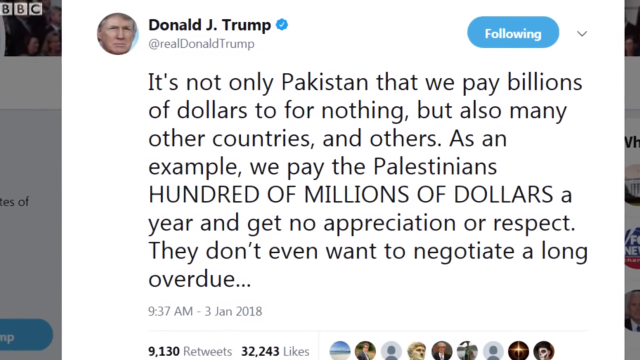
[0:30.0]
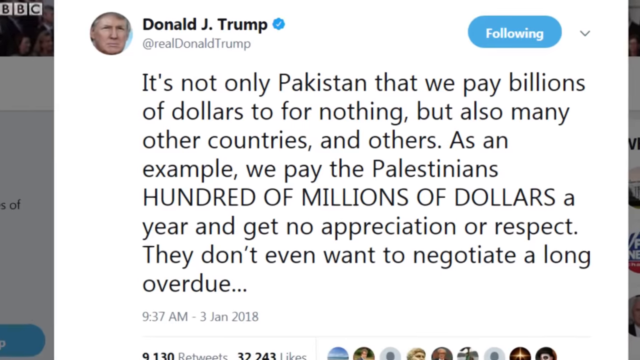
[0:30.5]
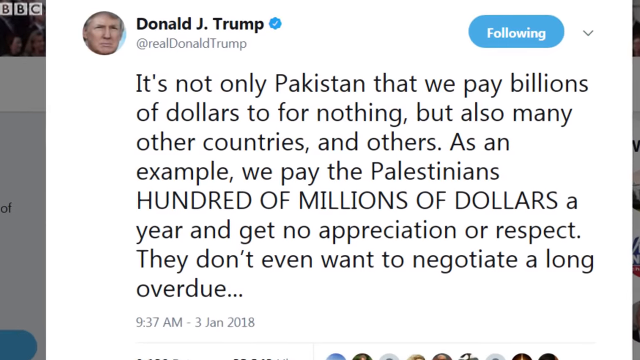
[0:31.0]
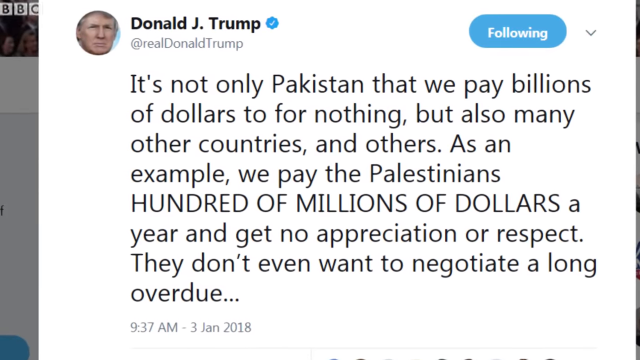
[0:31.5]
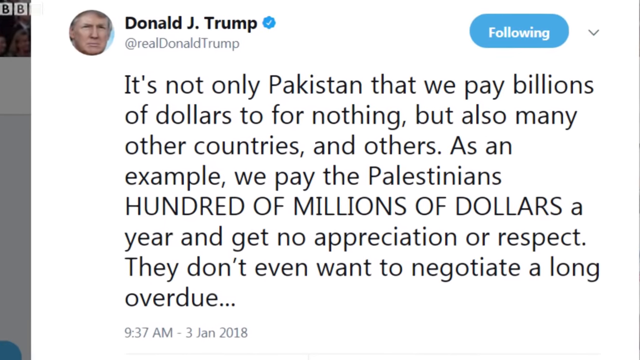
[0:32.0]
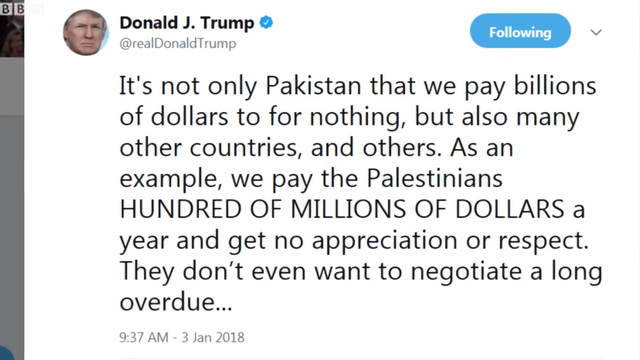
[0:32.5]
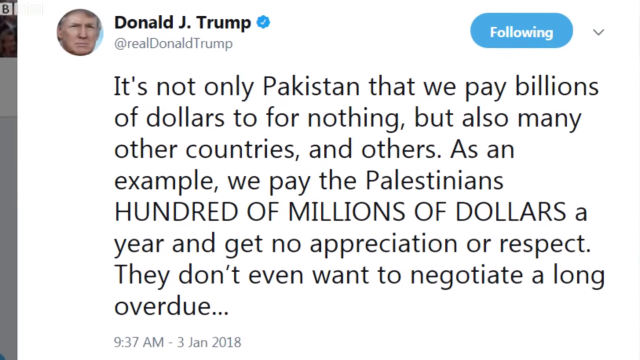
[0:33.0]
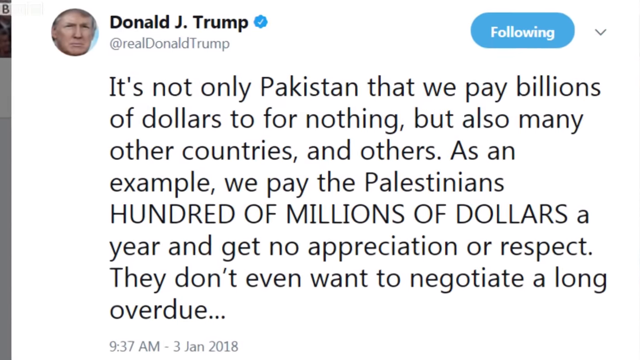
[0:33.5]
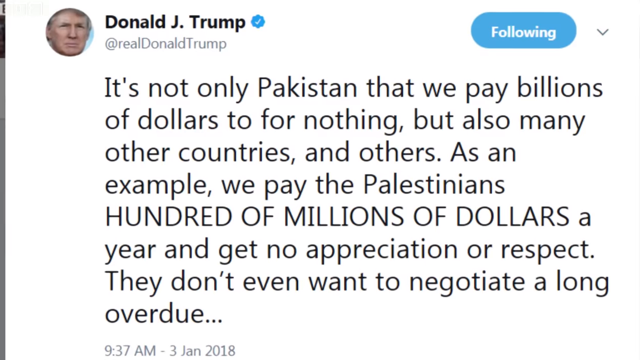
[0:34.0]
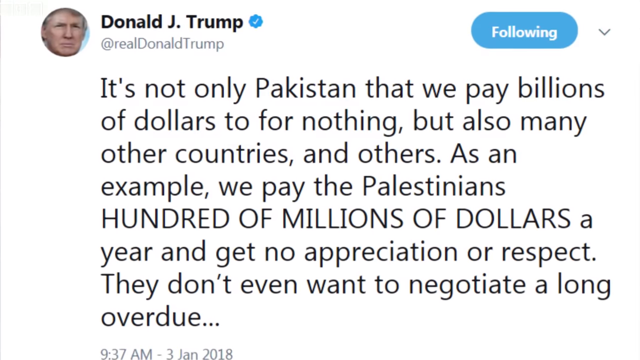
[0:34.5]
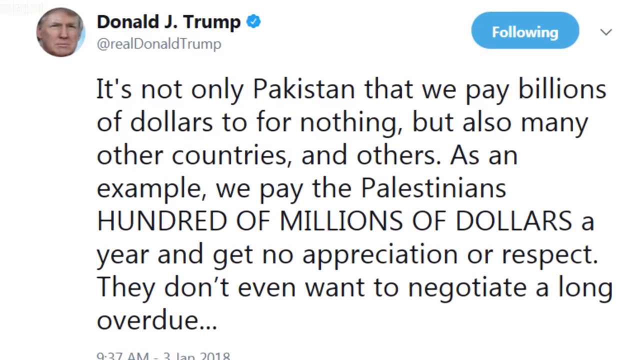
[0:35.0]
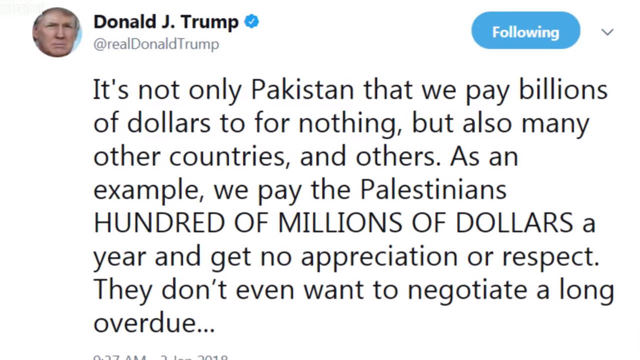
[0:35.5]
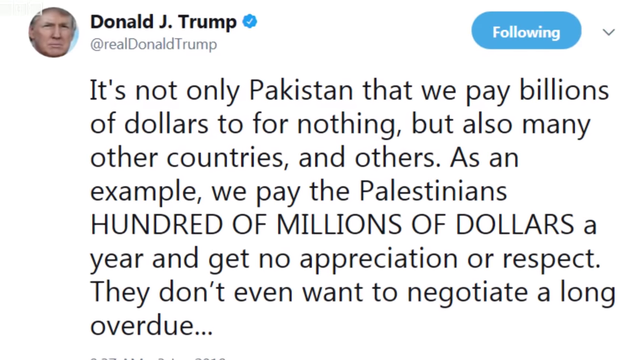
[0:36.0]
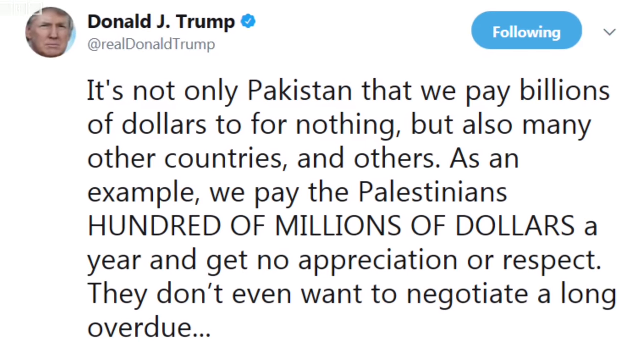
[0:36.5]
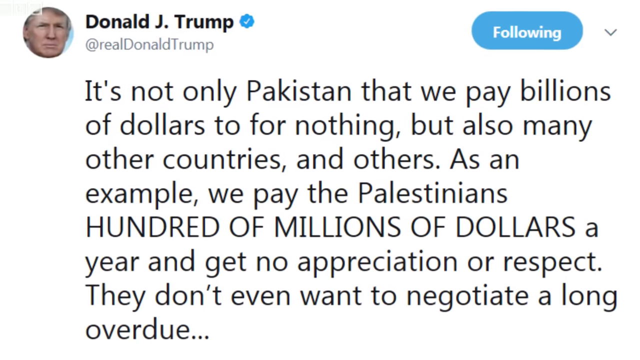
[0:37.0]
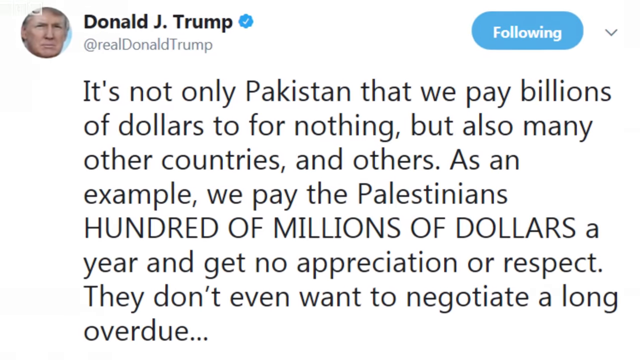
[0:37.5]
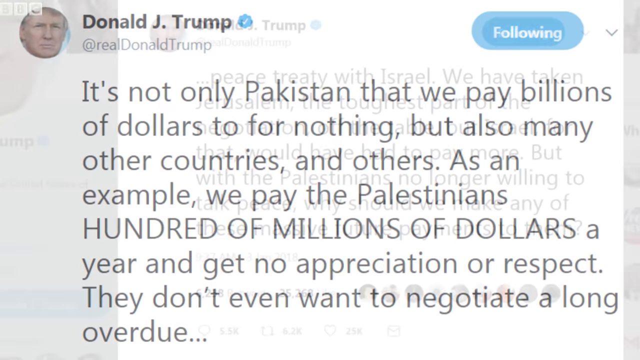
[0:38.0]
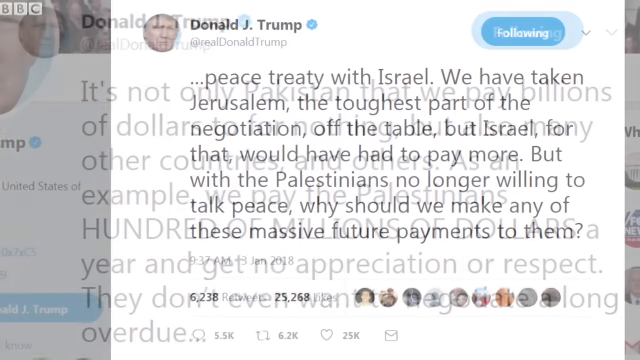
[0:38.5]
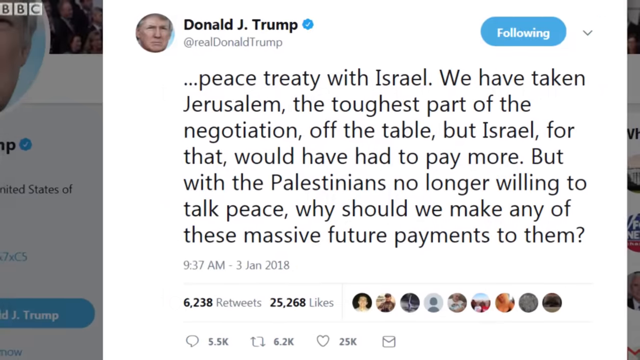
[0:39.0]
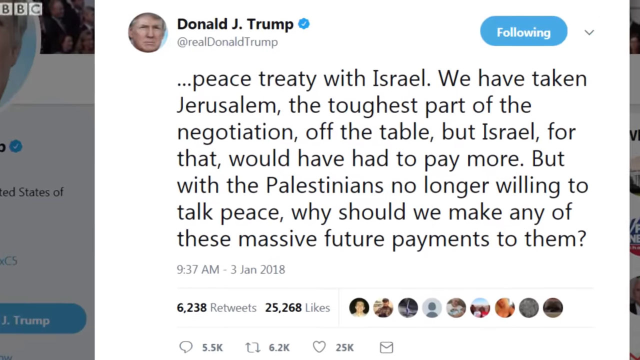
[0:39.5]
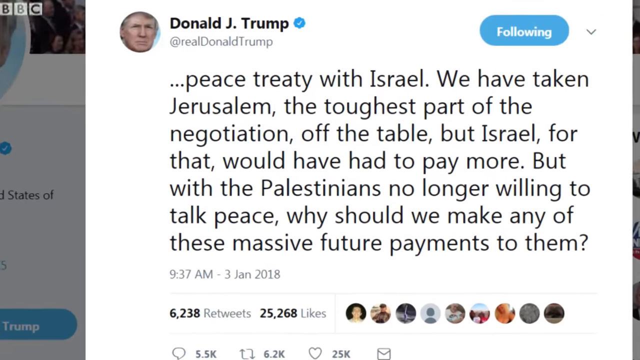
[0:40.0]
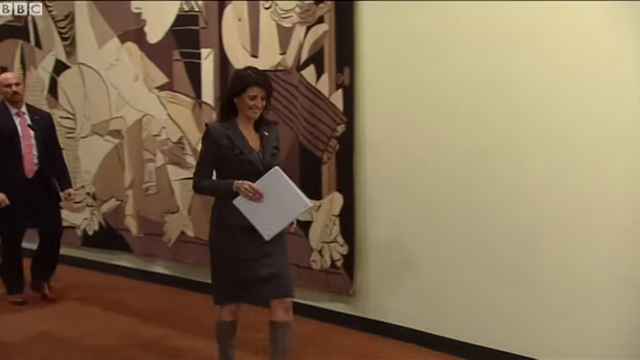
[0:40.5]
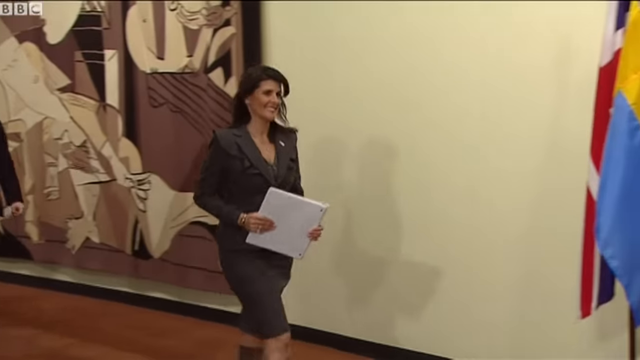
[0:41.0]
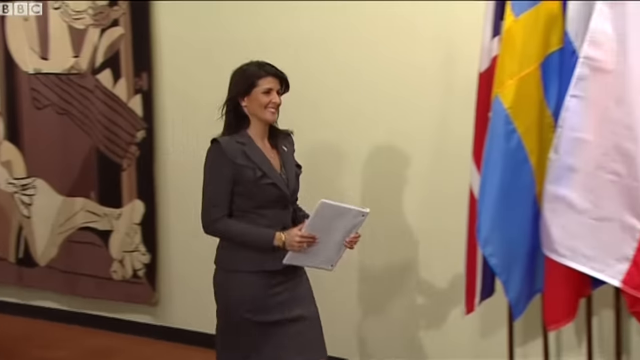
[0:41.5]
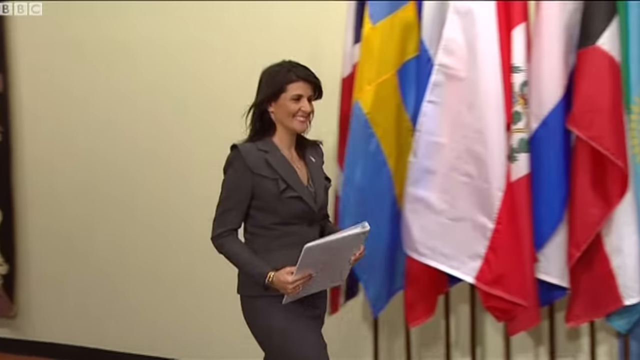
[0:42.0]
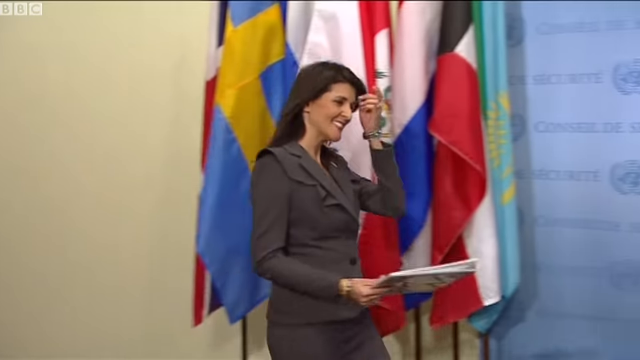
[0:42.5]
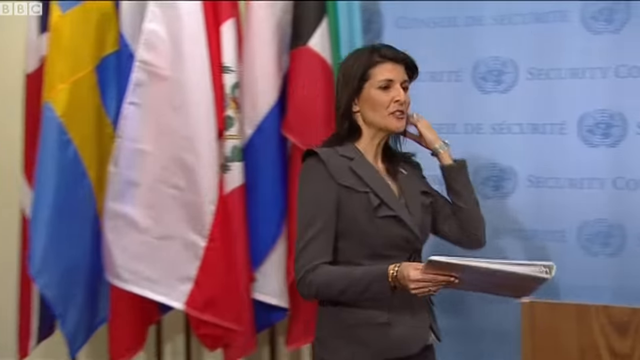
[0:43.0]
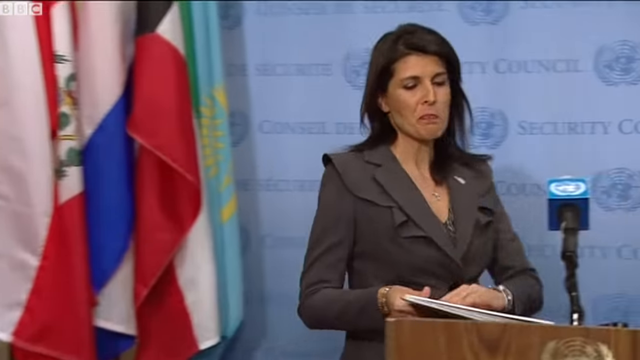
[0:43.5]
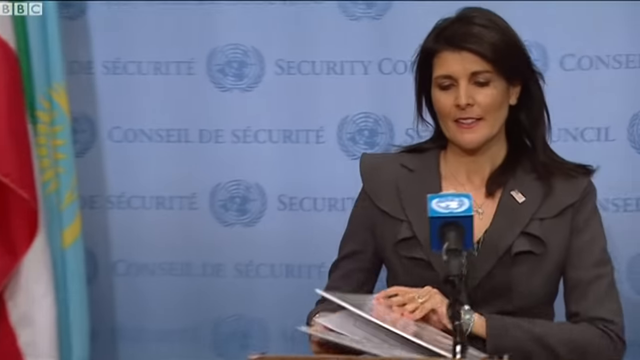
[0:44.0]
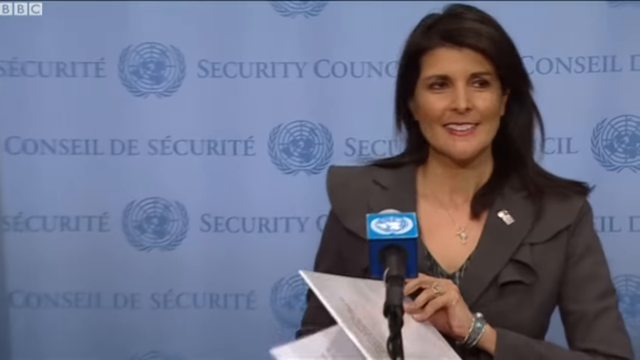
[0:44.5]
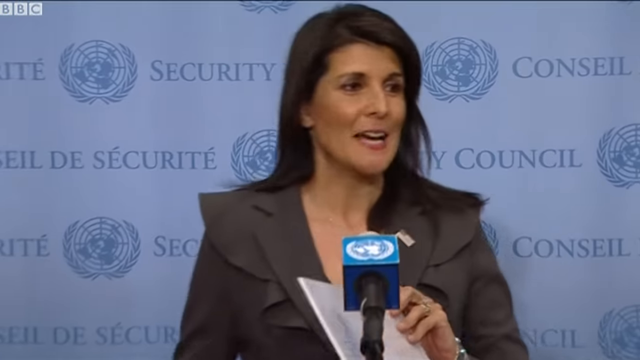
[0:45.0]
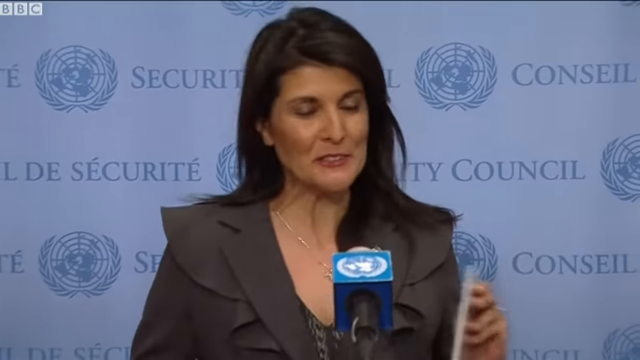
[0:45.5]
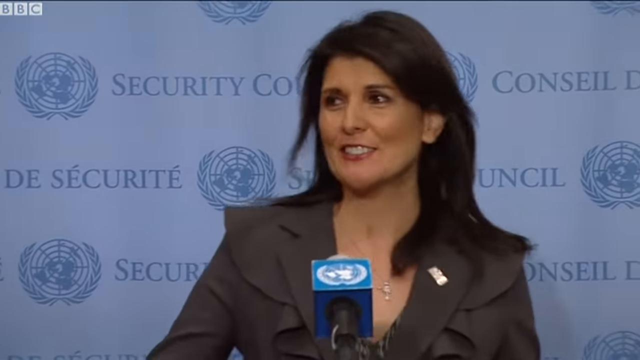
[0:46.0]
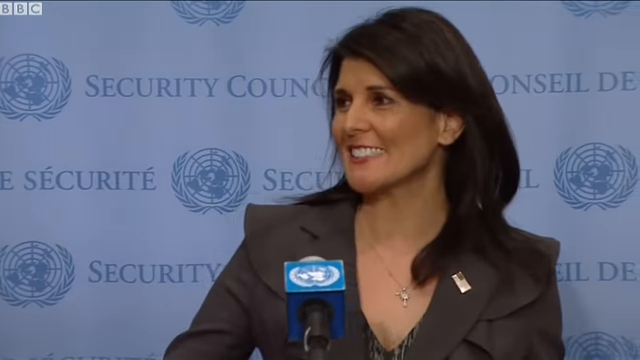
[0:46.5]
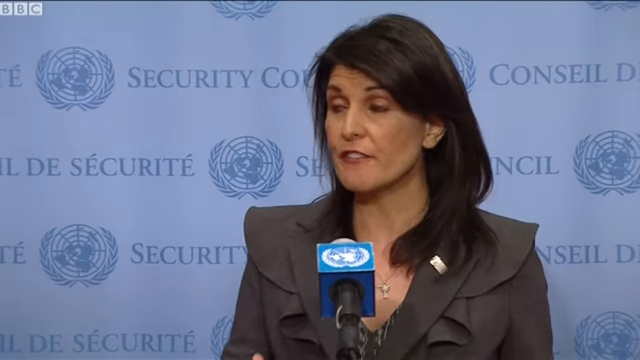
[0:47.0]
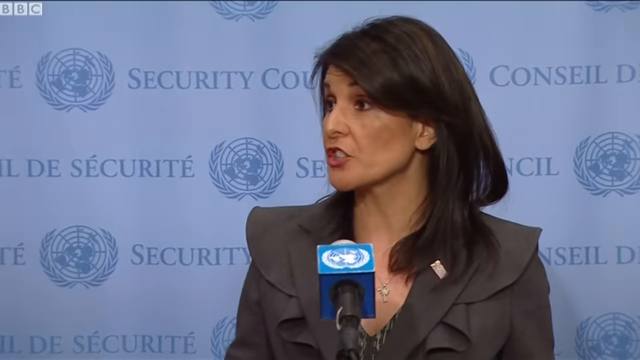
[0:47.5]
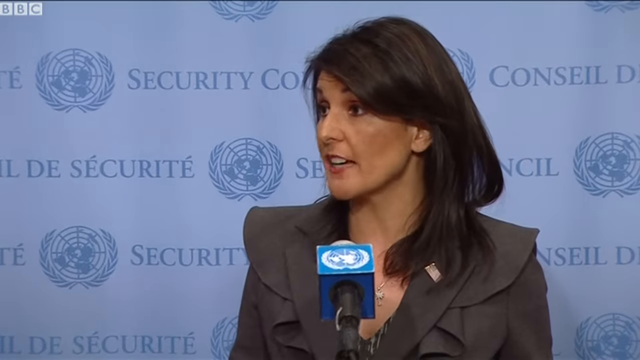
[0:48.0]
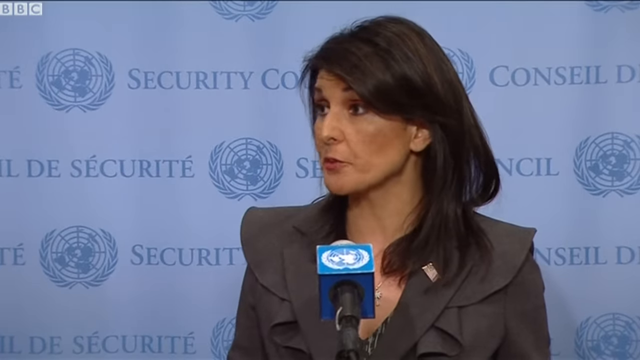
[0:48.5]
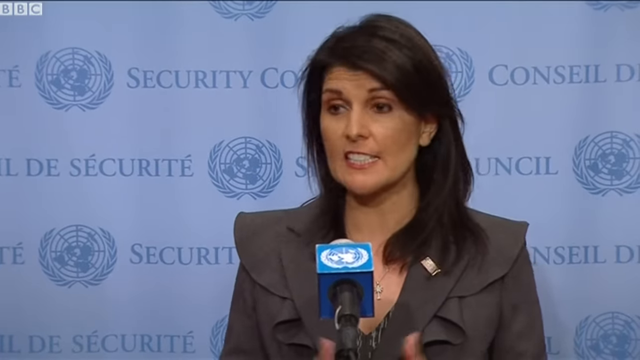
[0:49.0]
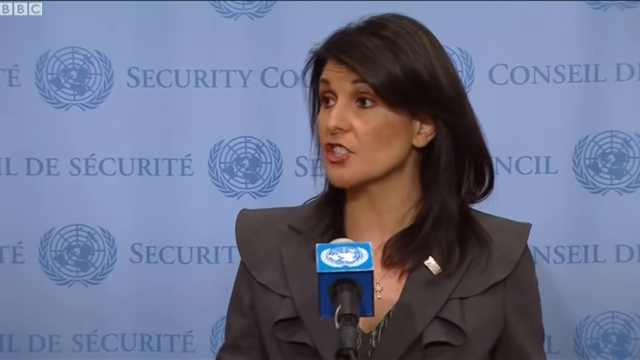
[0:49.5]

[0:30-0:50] The focus remains on Donald Trump's Twitter post, which is the first of two posts. The first reads, "it's not only Pakistan that we pay billions of dollars for nothing, but also many other countries and others. As an example, we pay the Palestinians hundreds of millions of dollars a year and get no appreciation or respect. They don't even want to negotiate a long overdue". The camera zooms in on this first post and stays with it for a few seconds before zooming in on the second part, which reads, "peace treaty with Israel. We have taken Jerusalem, toughest part of the negotiation, off the table, but Israel for that would have had to pay more. But with the Palestinians no longer willing to talk peace, why should we make any of this massive future payments to them?" This second post stays on screen for three seconds at most. The scene then transitions to a woman wearing a dark brown feminine business suit and a gold necklace. Holding a folder in her hand, she walks down an aisle to a podium, where she stands, puts down the folder, opens it, and starts talking, apparently to an audience. Flags of different countries are briefly visible behind her. The shot then closes up on her face, and a screen behind her reads "Security Council" with the United Nations logo next to the phrase. She continues talking at the podium.